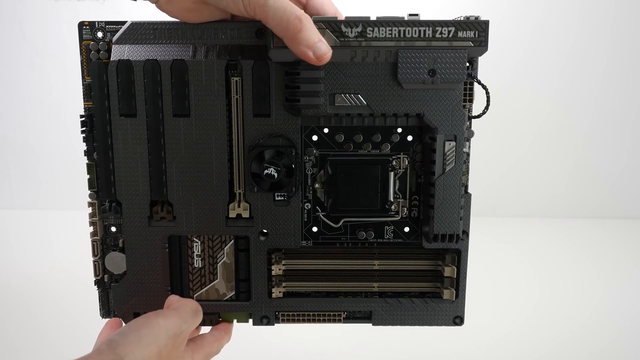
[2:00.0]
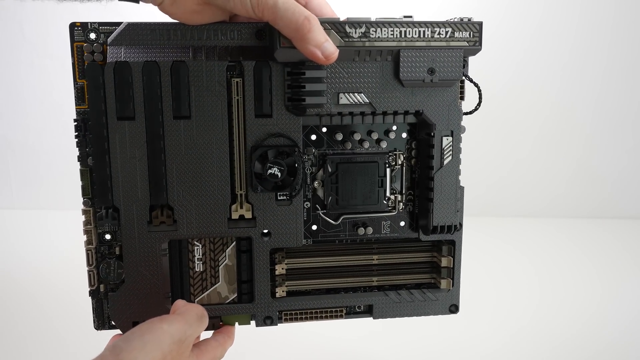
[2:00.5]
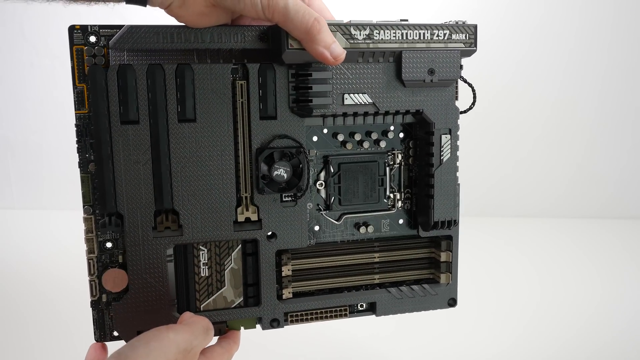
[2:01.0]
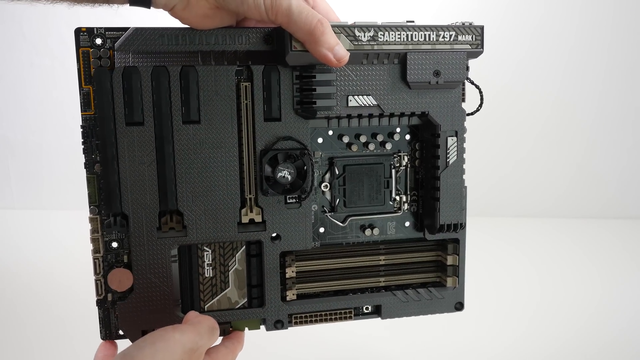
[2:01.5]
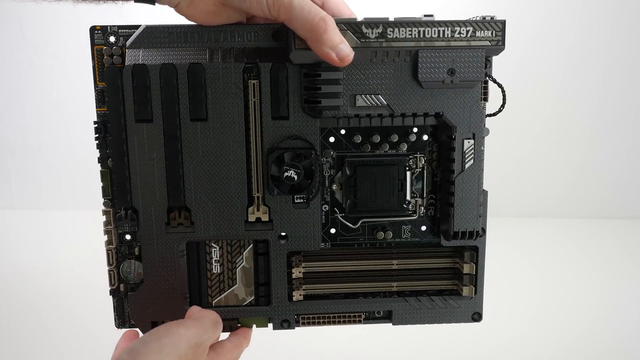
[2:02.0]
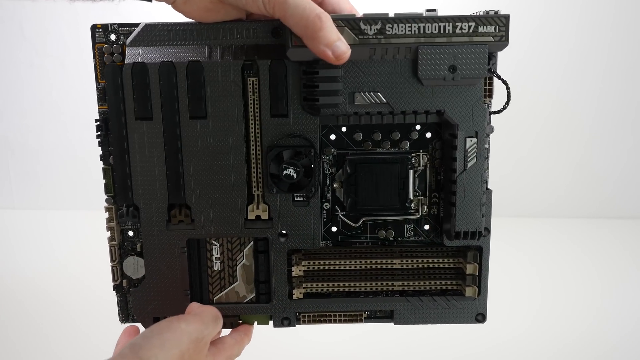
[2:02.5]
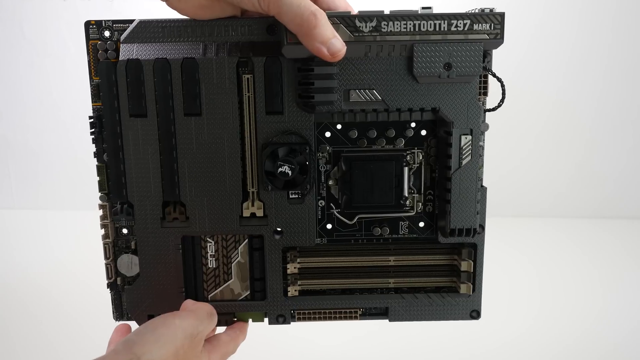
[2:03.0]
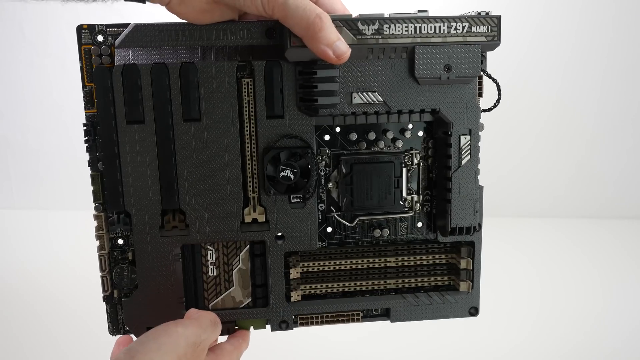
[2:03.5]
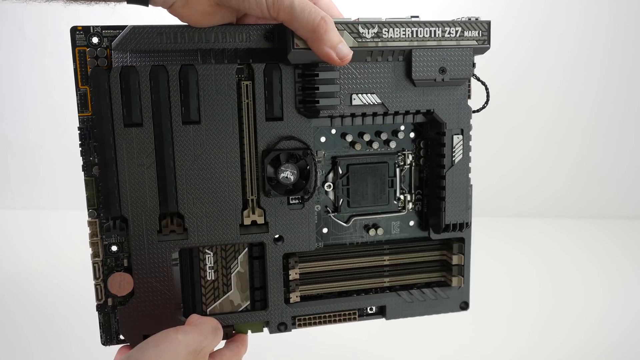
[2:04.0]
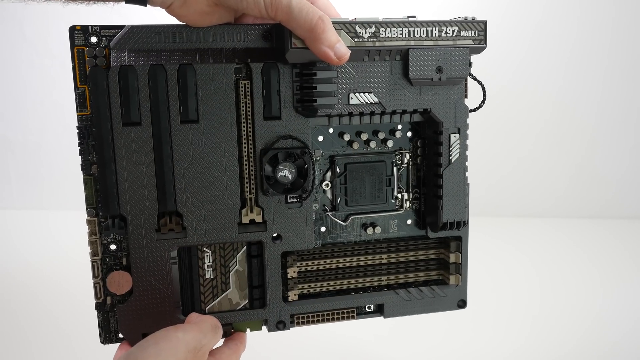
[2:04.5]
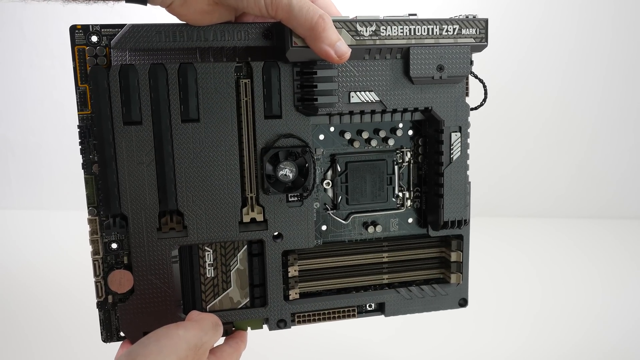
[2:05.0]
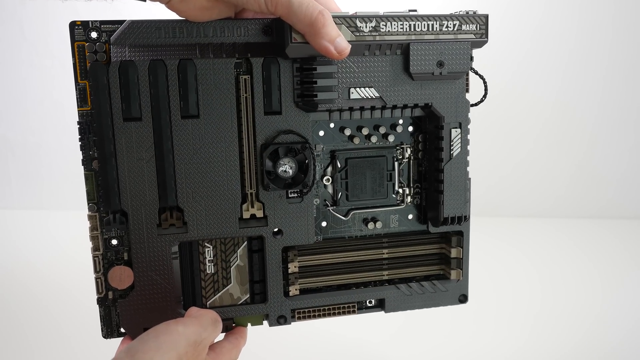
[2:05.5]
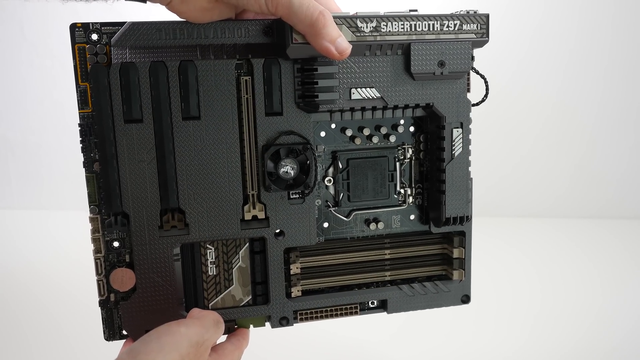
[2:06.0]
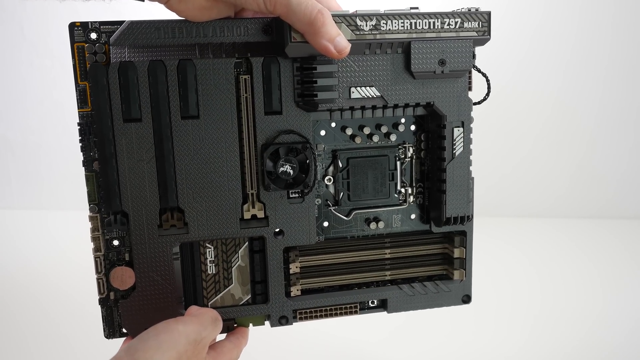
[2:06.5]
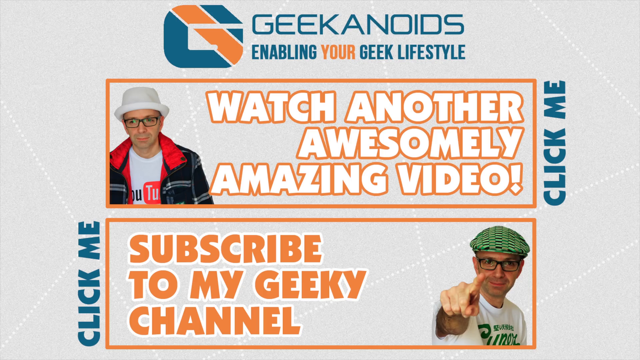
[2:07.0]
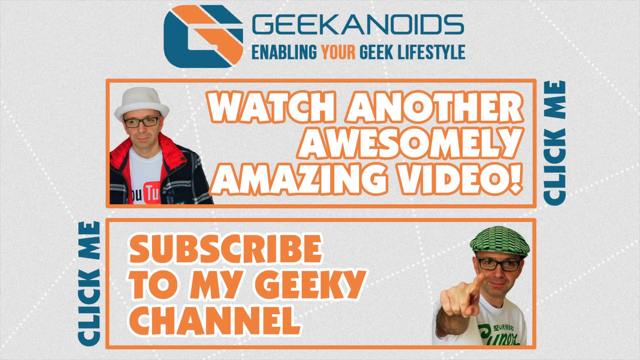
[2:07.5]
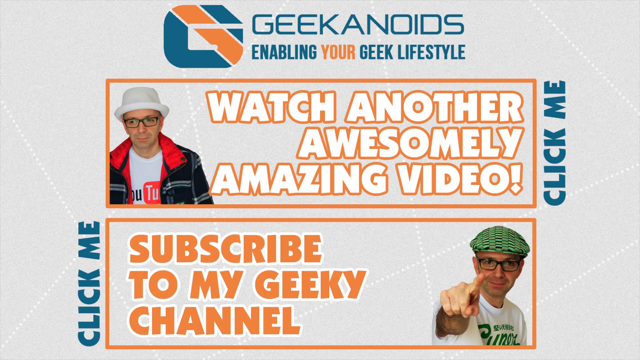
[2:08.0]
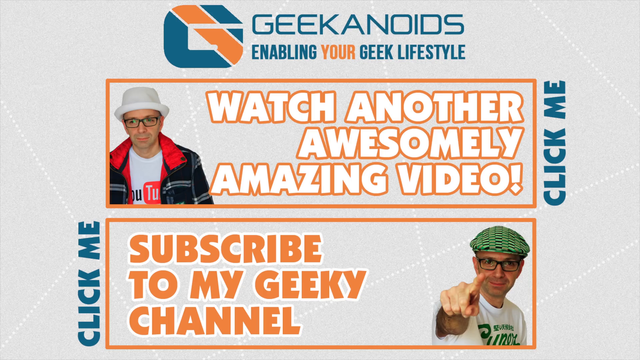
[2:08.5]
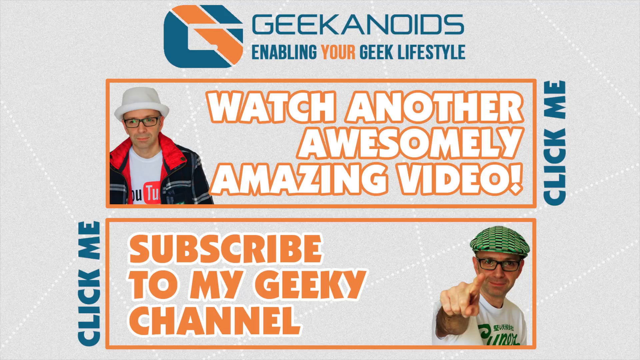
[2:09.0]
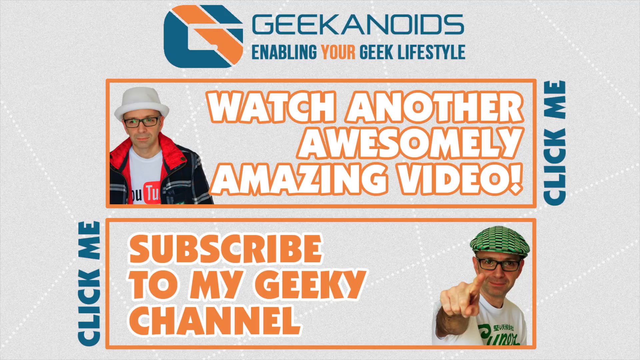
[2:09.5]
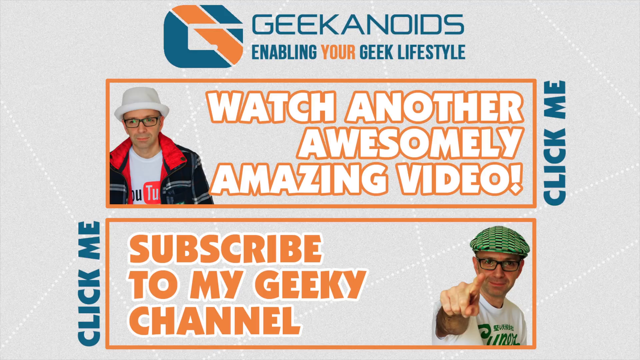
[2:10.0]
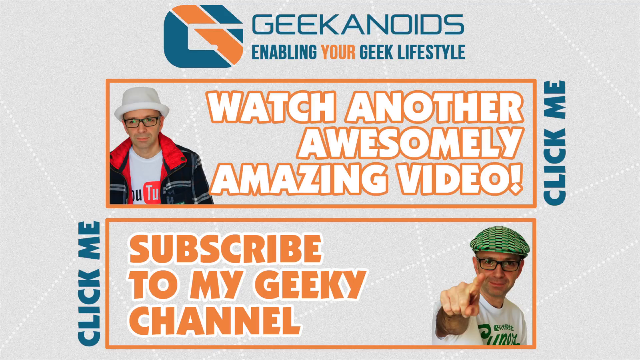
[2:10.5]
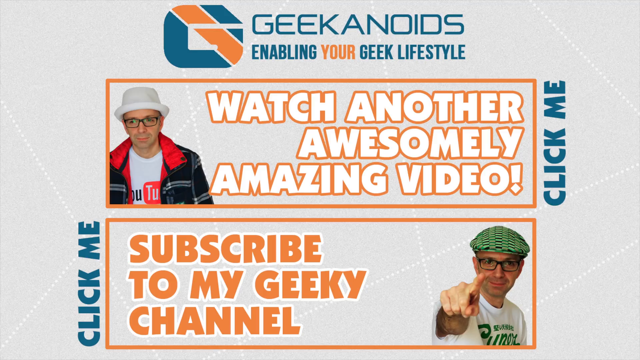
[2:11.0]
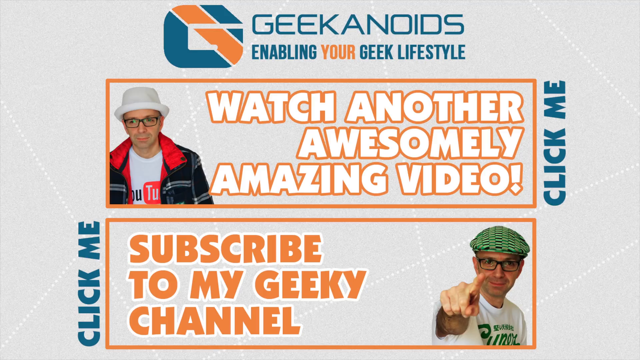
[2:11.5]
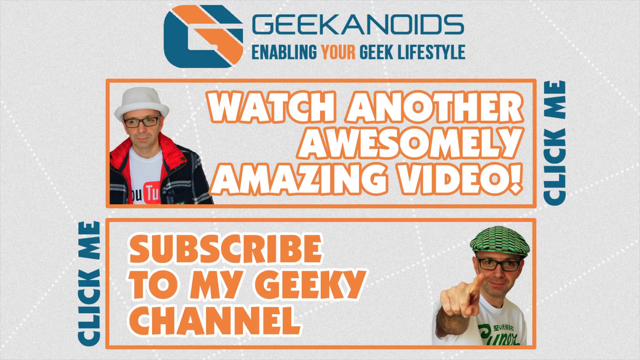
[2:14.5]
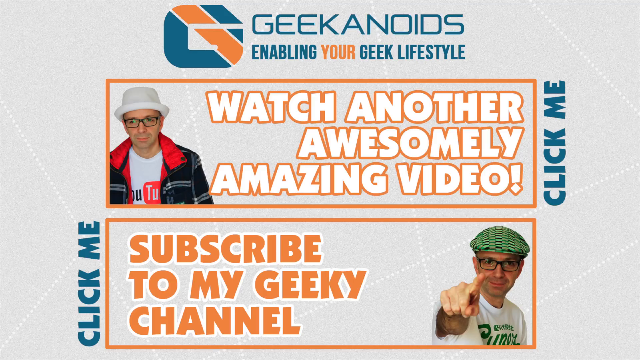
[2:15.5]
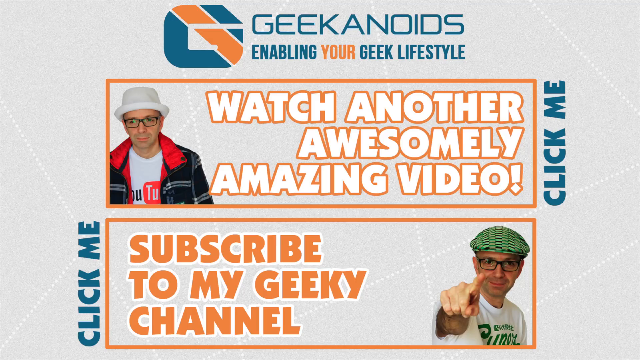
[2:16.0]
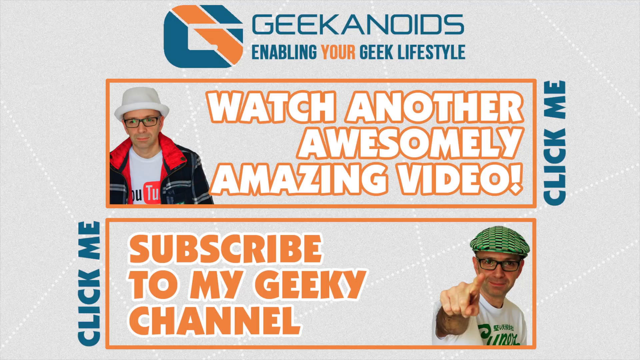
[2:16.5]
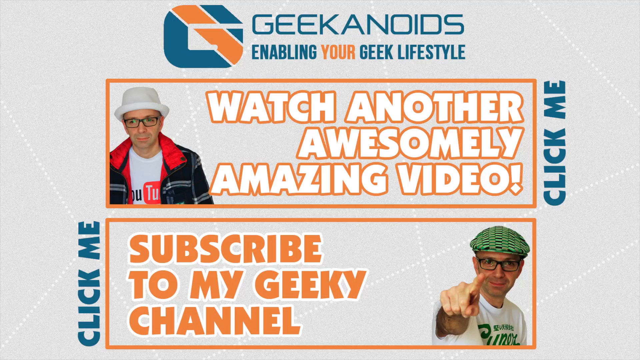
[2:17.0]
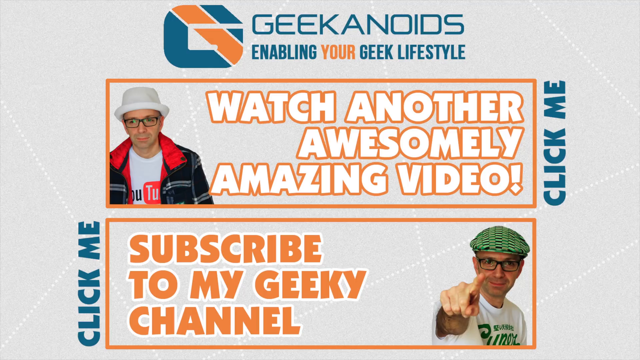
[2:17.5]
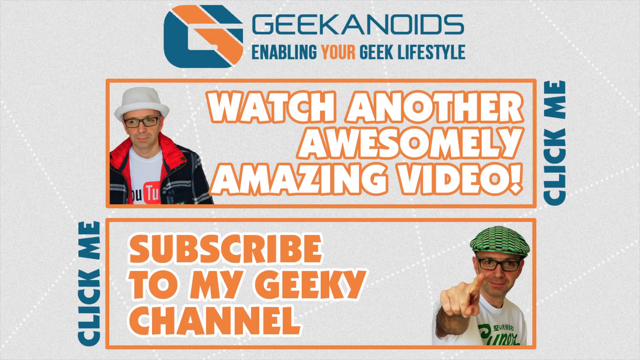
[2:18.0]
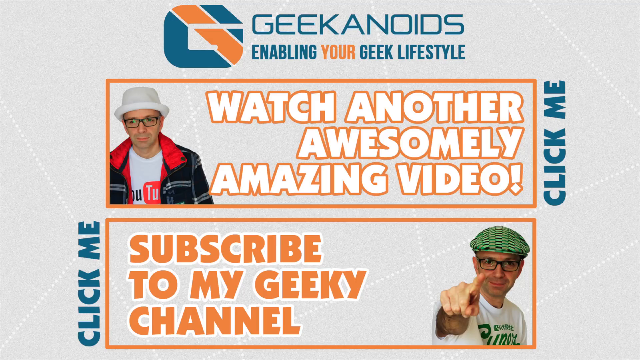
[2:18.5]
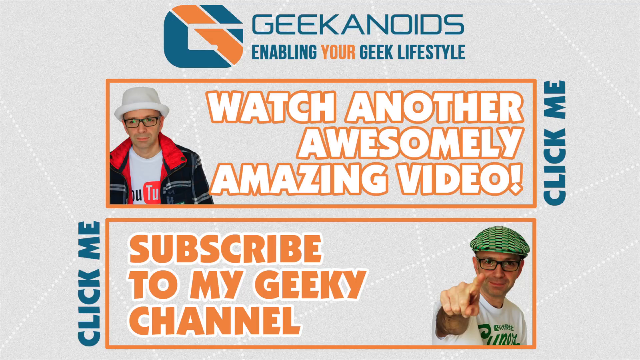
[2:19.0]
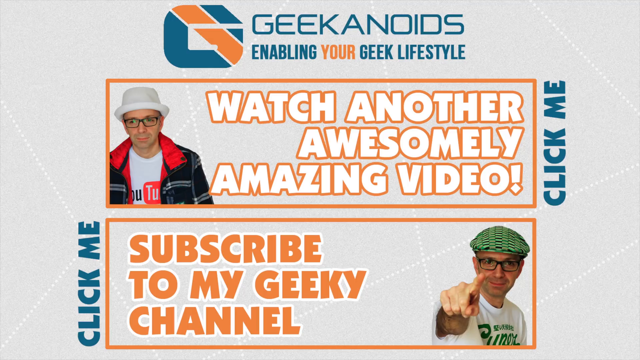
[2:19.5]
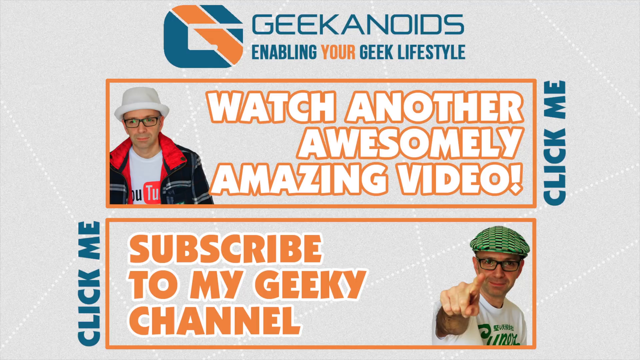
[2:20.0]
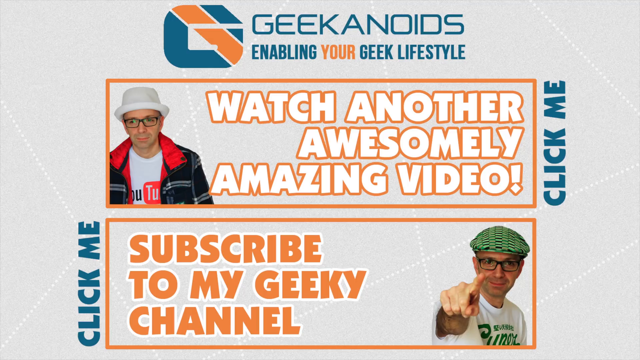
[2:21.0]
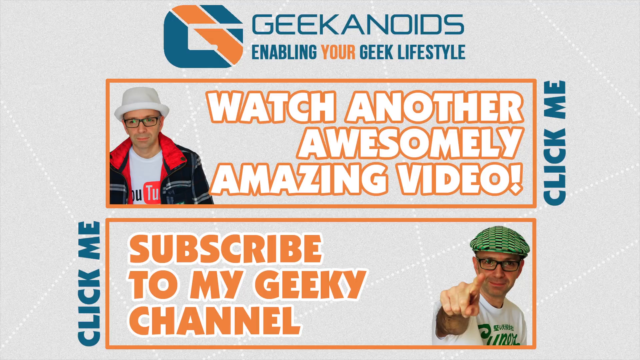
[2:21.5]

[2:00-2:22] The video creator continues to rotate the motherboard slightly, rocking it back and forth against the light to show how the lighting affects the visibility of the black stippled, dotted design and the reflectivity of the silver components. An outro animation then appears on a light grey background with dotted white lines running across the screen. At the bottom is a transparent box with an orange border containing the orange text "Subscribe to my geeky channel". On the left-hand border of this box, blue text running upward reads "Click Me". The video creator, a white male with black-rimmed glasses and a green beret, appears in the right-hand corner of this box, pointing his outstretched right index finger toward the camera. Above it is a similar box with the creator in its left-hand corner, wearing a white fedora, a white YouTube t-shirt and a black checkered jacket with red lining; its text reads "Watch another awesomely amazing video" in white with an orange outline, and an upward-angled "Click Me" is on its right-hand side. At the very top, above the two boxes, is the Geekanoids logo on the left with "Geekanoids" on the right and the slogan "Enabling Your Geek Lifestyle" beneath the Geekanoids text.